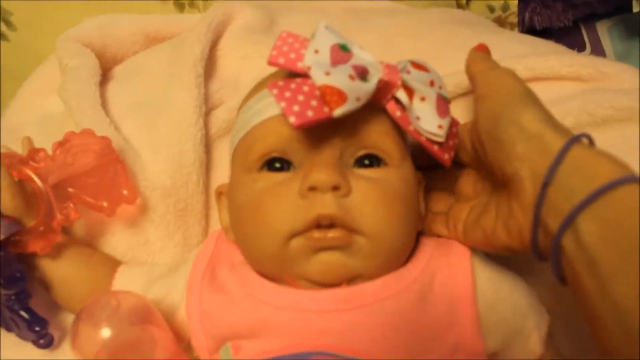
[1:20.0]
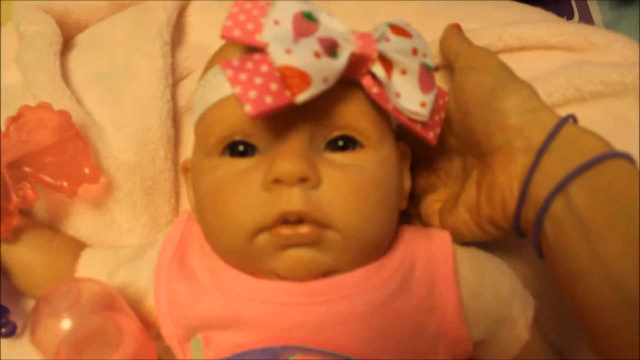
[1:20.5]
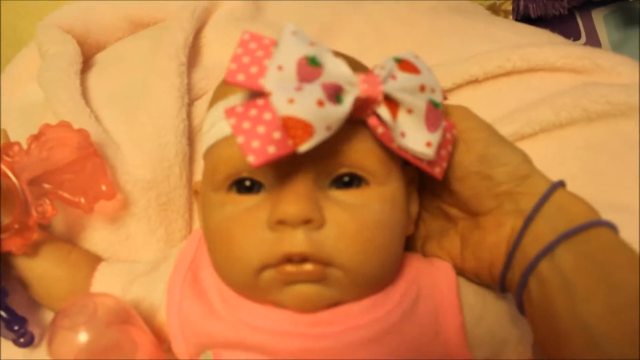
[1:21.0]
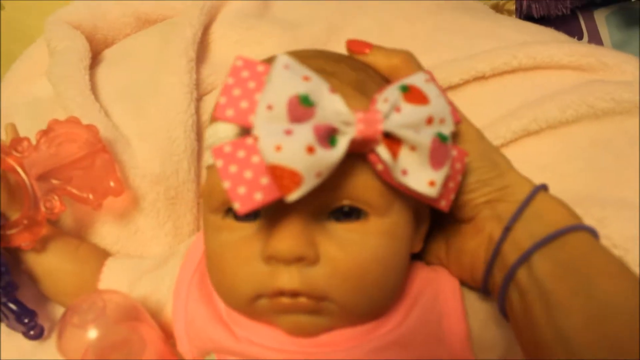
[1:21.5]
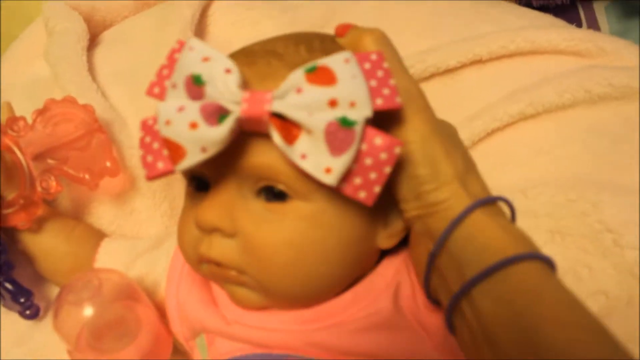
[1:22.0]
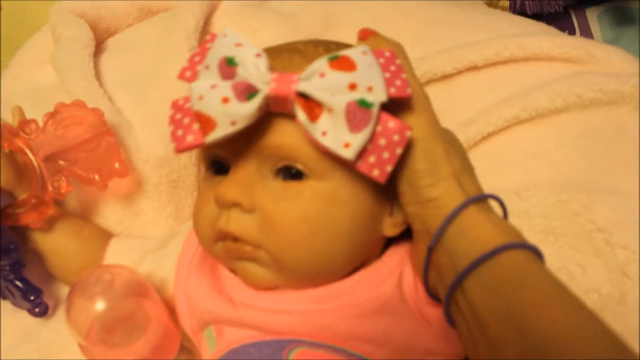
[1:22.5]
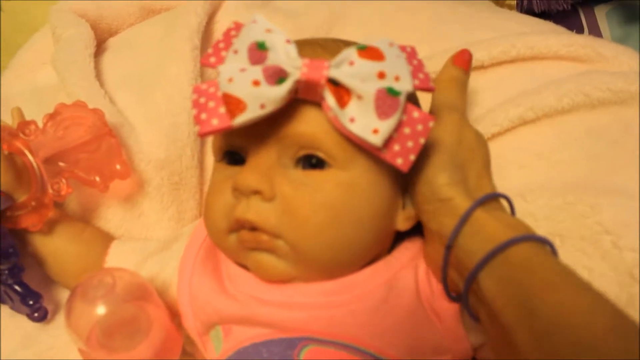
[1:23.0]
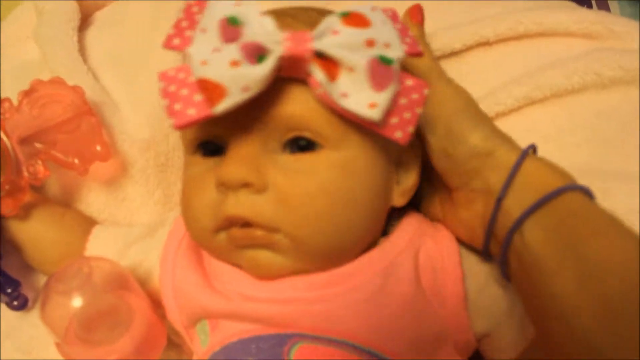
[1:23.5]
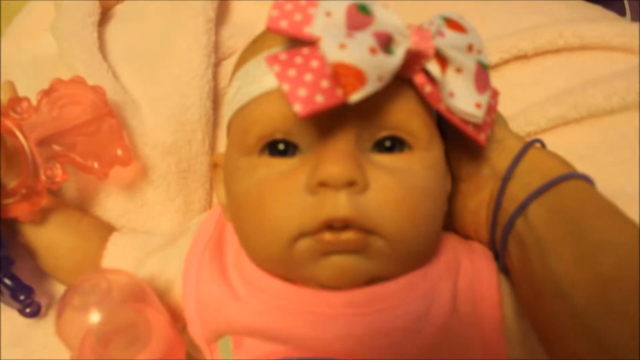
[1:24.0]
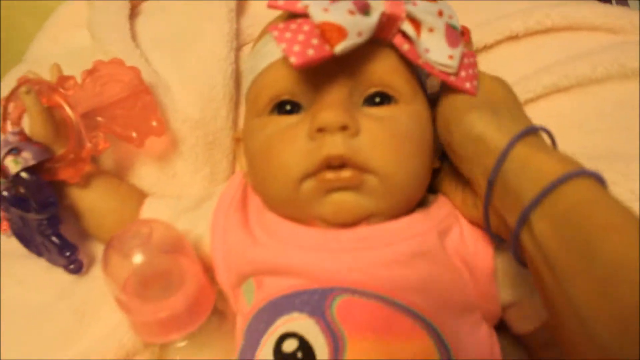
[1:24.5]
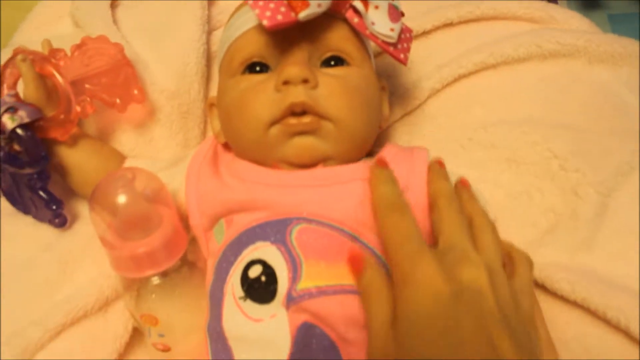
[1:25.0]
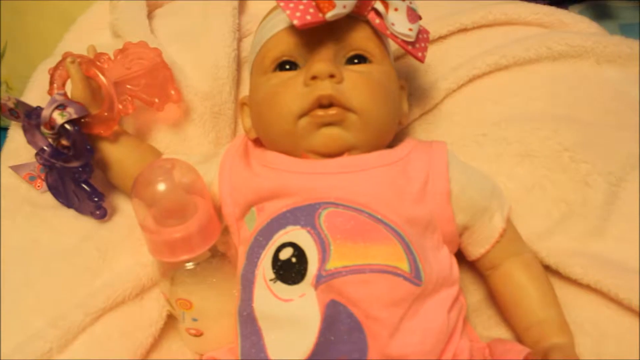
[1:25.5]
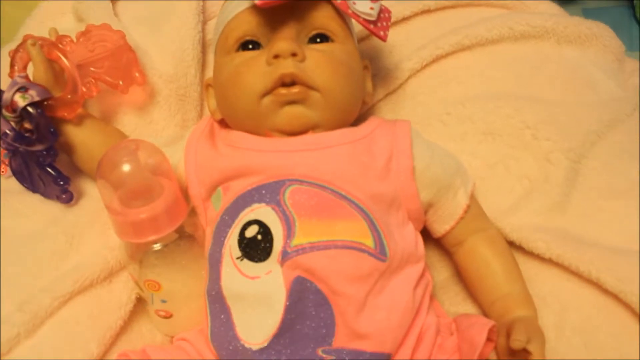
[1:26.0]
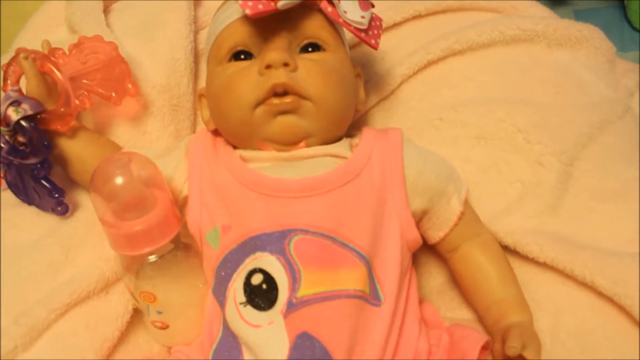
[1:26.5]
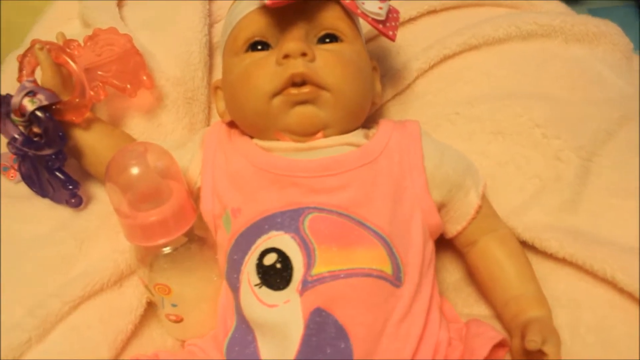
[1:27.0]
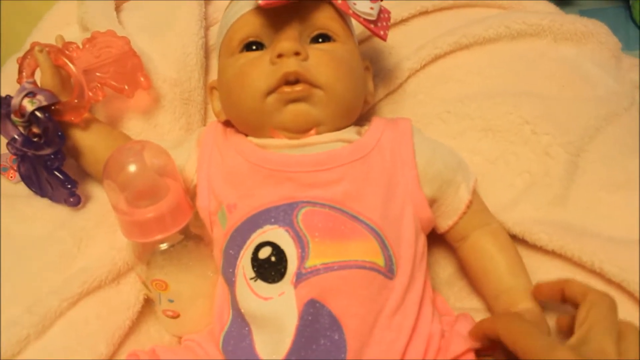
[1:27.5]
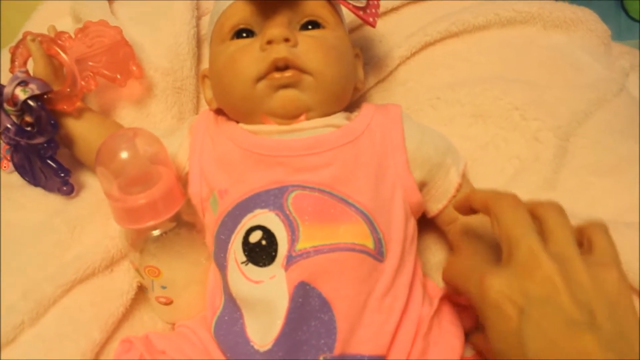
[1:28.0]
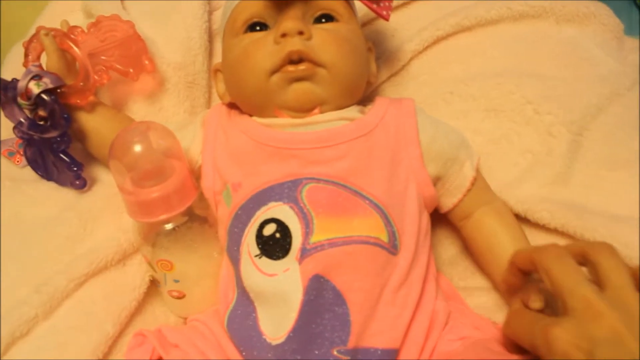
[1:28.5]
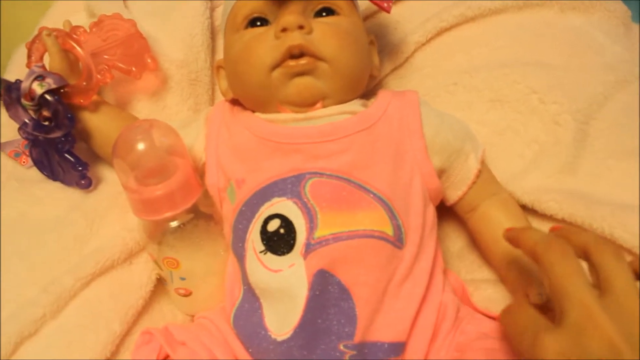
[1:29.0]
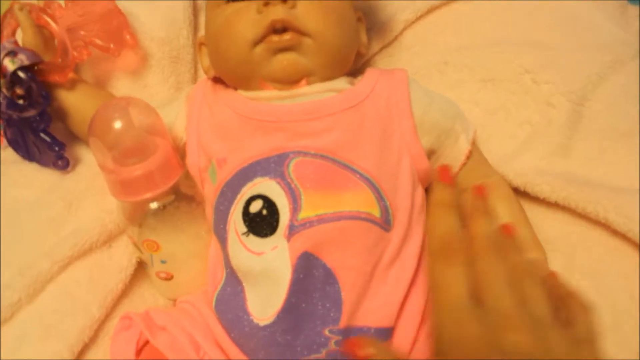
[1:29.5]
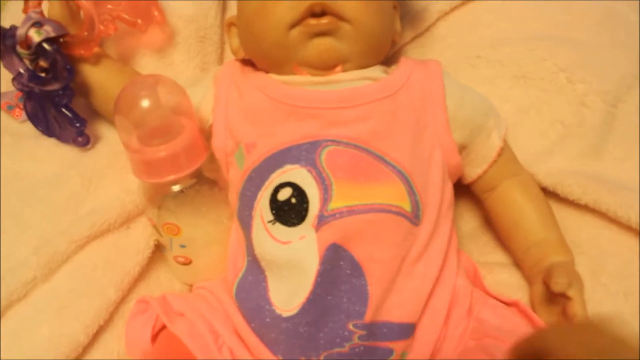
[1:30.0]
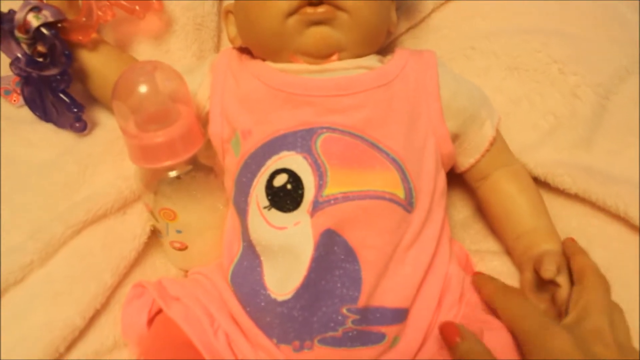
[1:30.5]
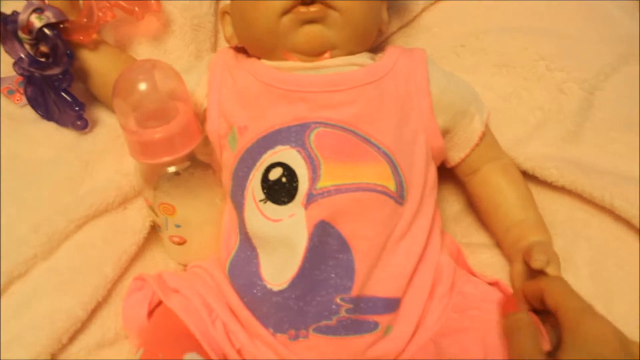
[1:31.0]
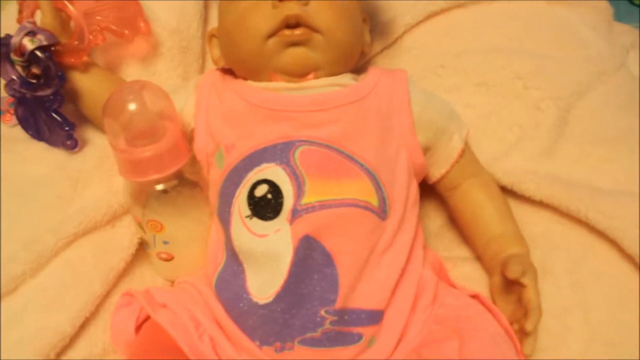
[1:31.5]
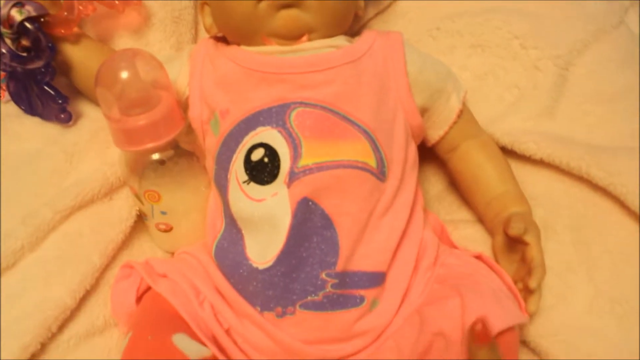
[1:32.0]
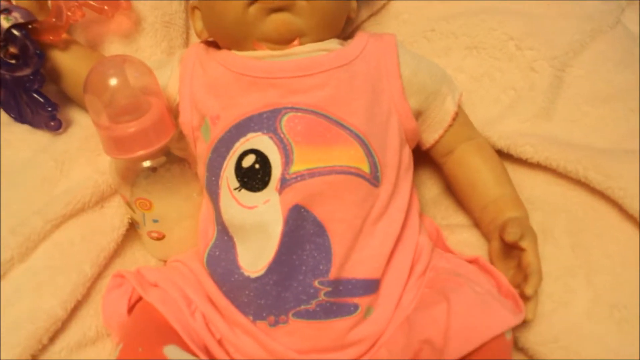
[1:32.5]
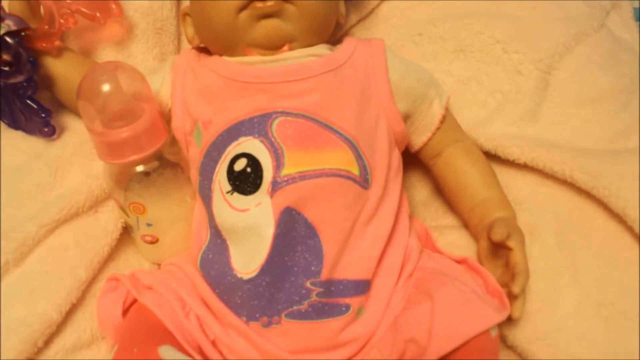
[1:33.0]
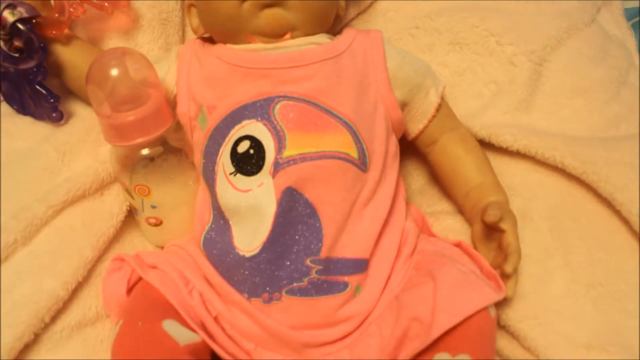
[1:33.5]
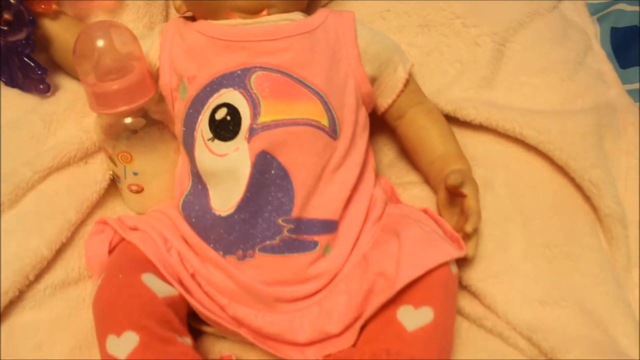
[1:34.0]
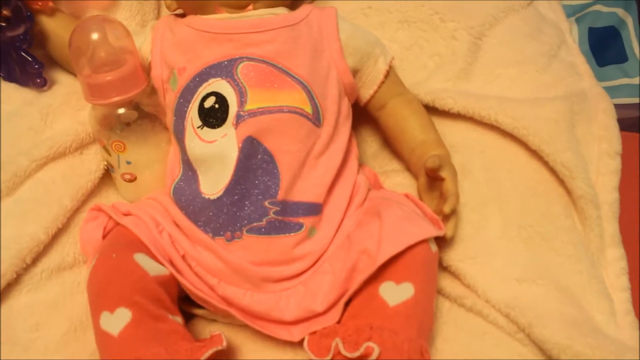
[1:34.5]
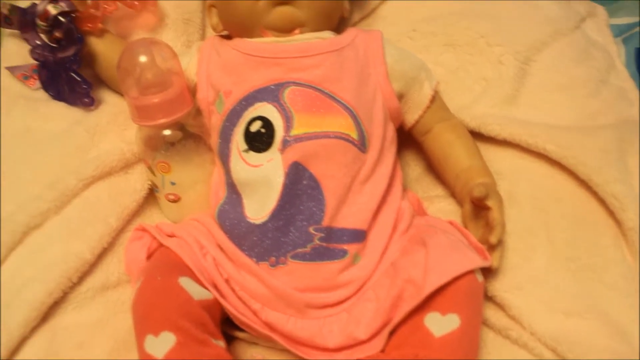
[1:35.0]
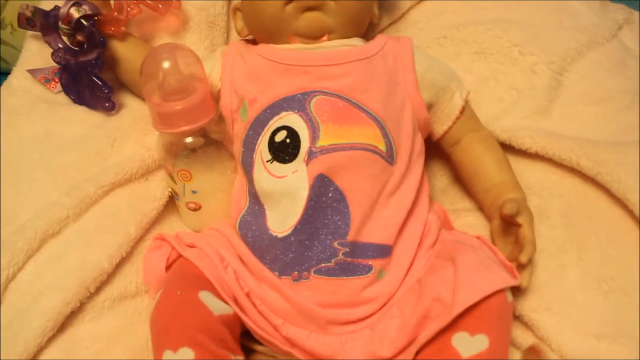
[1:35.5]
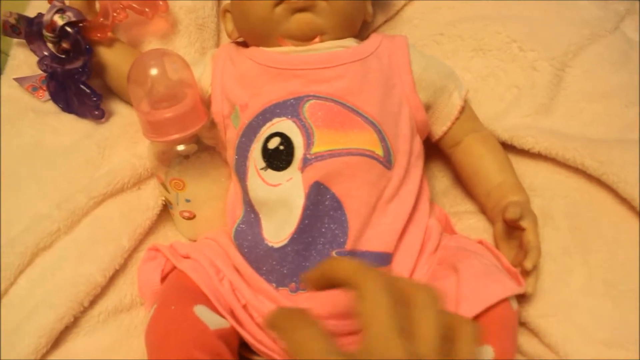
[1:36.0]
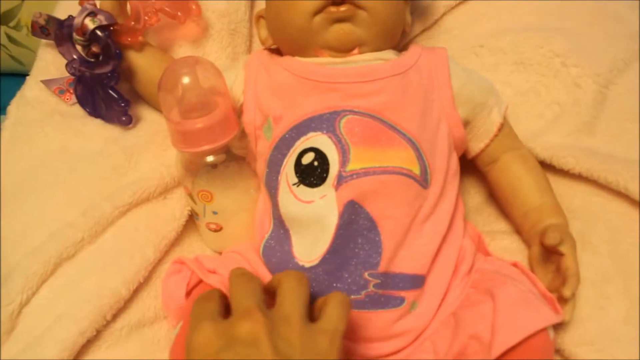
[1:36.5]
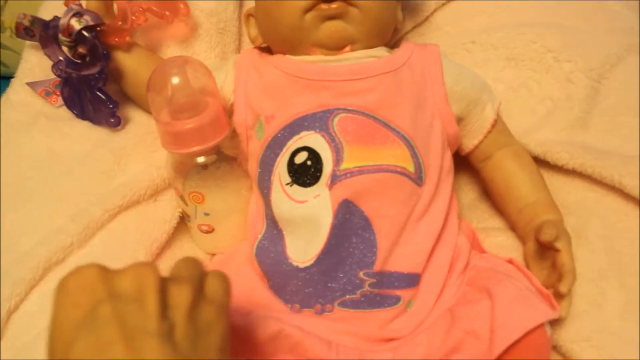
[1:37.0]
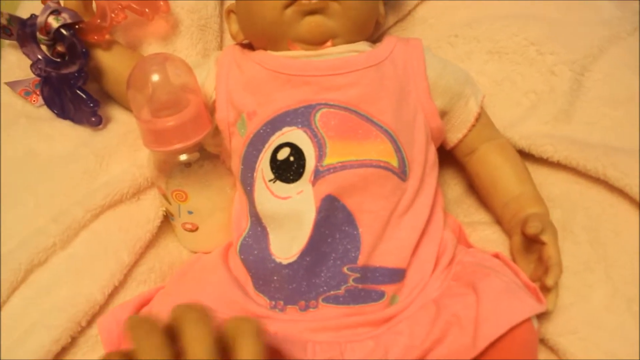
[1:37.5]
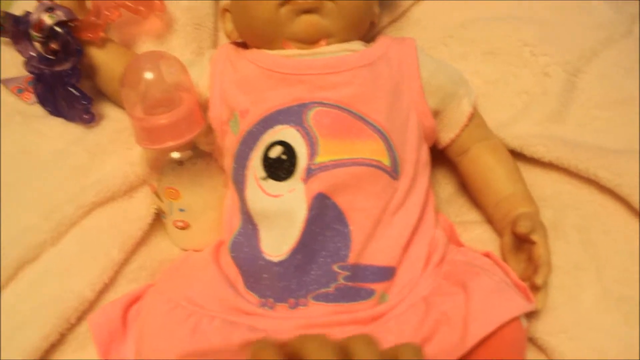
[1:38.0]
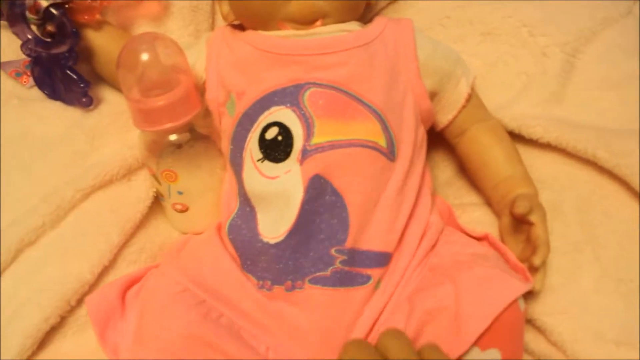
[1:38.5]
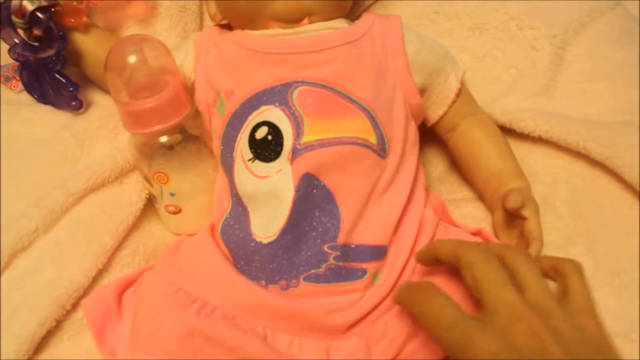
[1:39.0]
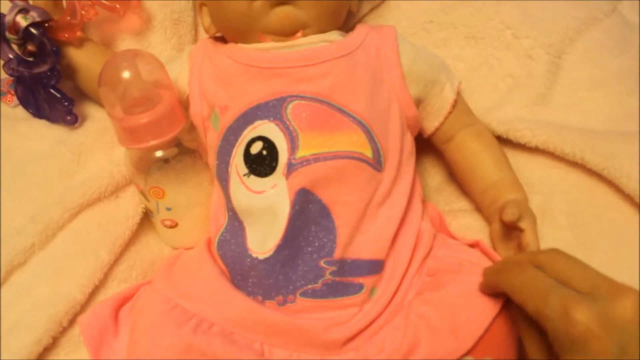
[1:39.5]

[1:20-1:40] A person lifts the baby doll's head with their right hand, palming the back of its head, then stretches and feels the material of the pink dress, which has an illustration of a purple and white flamingo, stretching it around to show it off. A glass bottle of milk is at the side of the doll. The person's right hand, with pink fingernails and two blue bracelets, is shown as they show off the clothes. The doll is lying on a thick blanket on top of a bed.